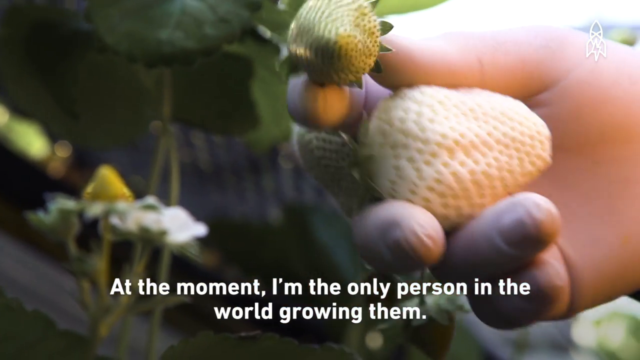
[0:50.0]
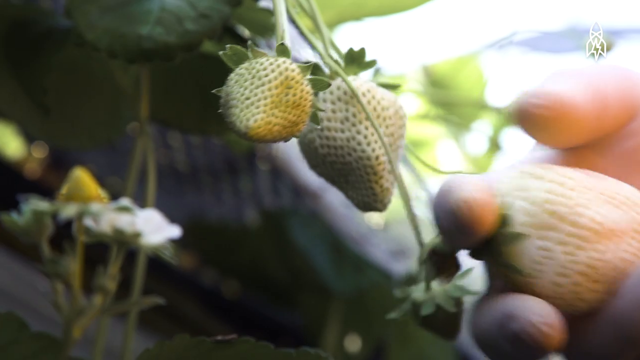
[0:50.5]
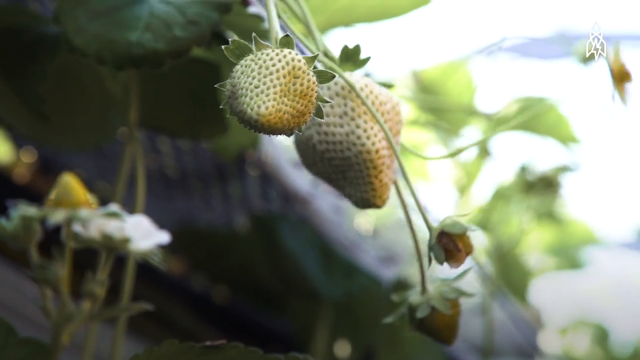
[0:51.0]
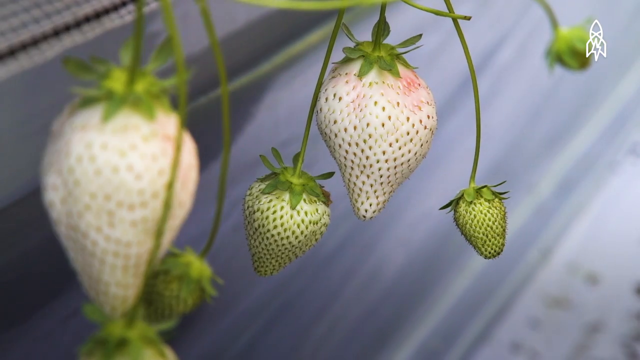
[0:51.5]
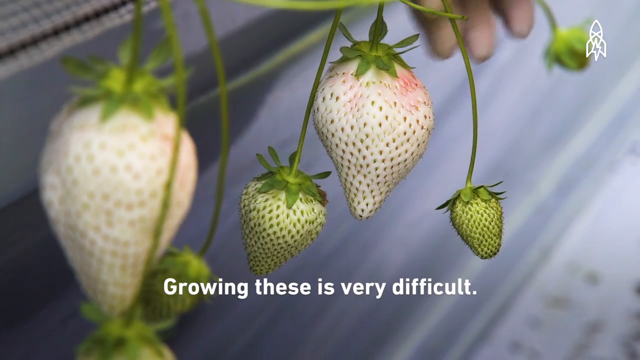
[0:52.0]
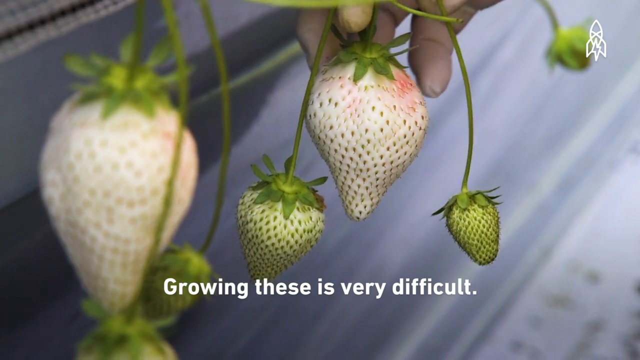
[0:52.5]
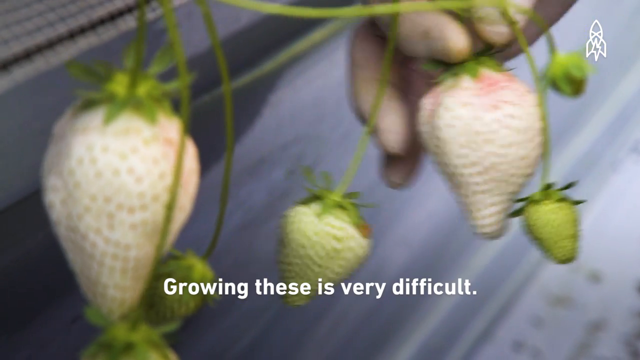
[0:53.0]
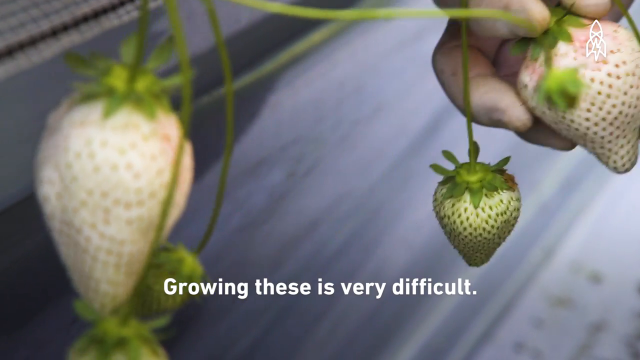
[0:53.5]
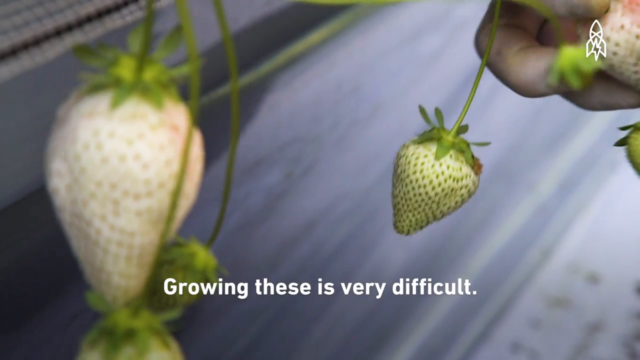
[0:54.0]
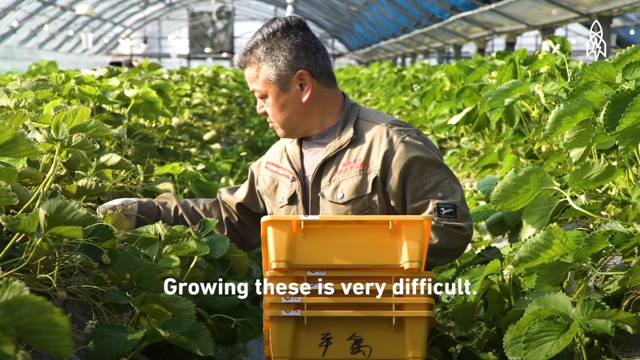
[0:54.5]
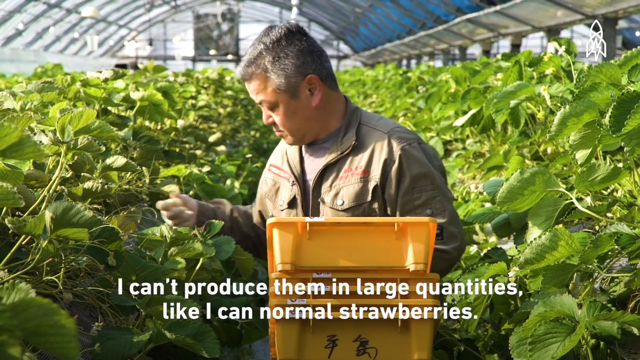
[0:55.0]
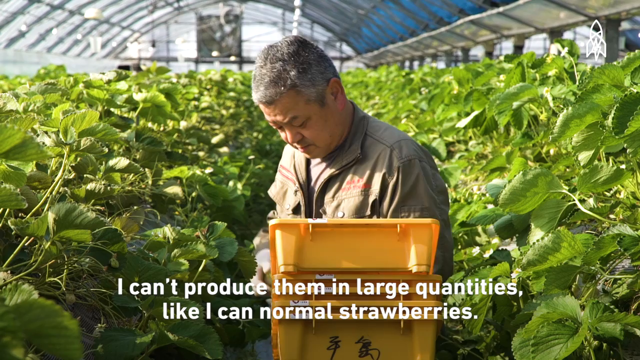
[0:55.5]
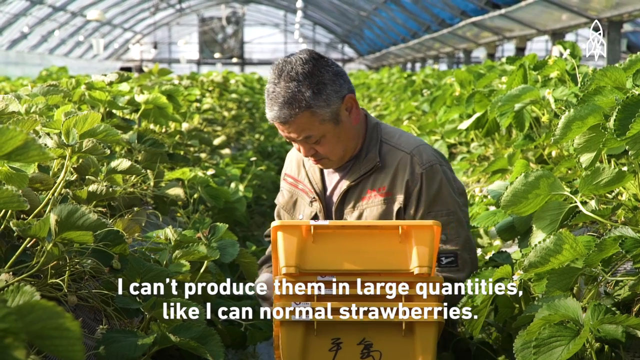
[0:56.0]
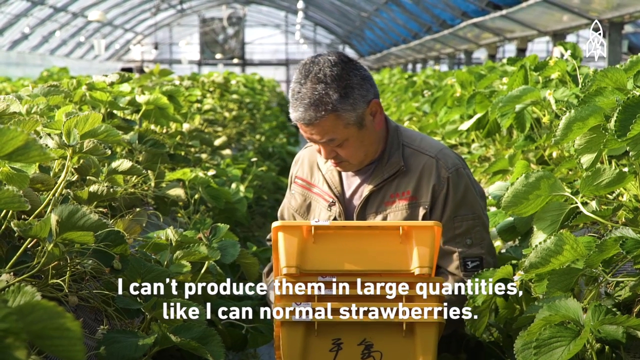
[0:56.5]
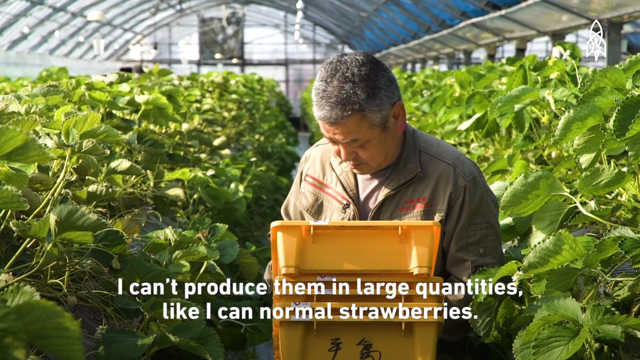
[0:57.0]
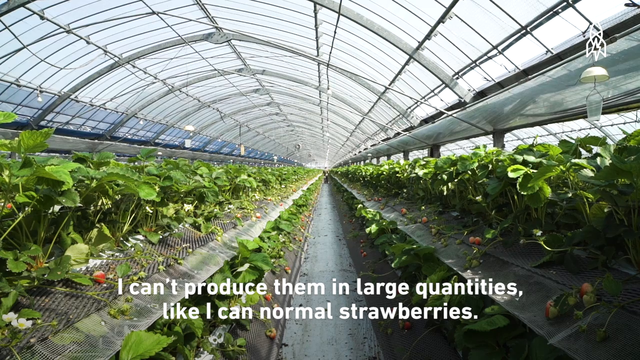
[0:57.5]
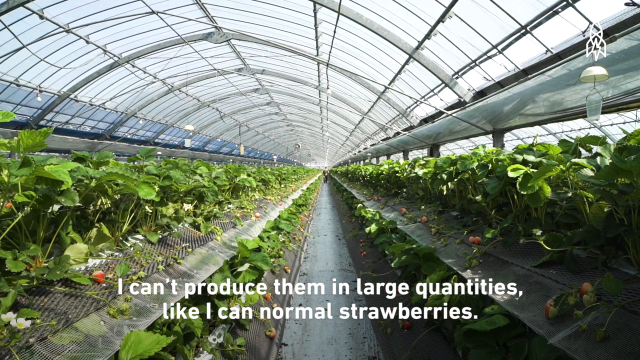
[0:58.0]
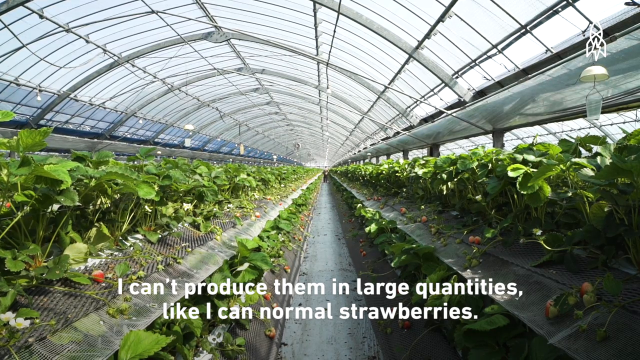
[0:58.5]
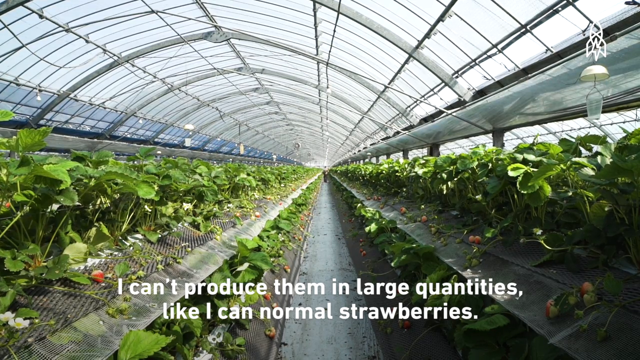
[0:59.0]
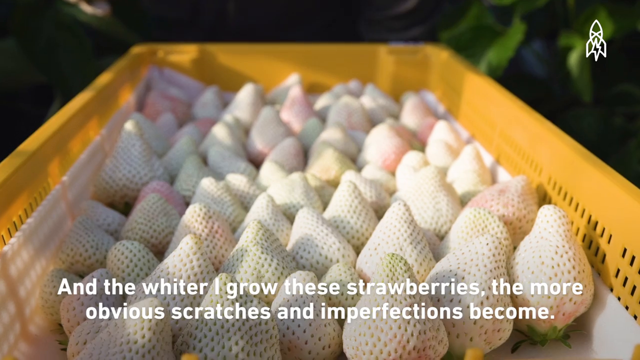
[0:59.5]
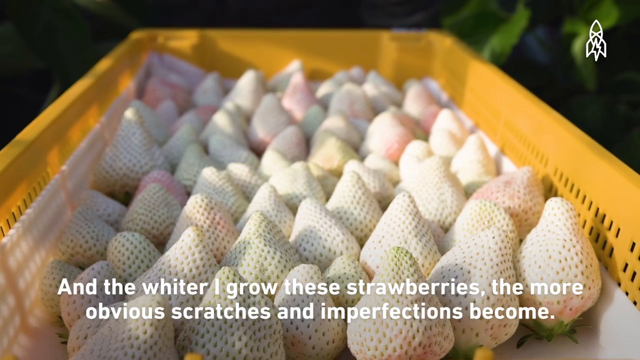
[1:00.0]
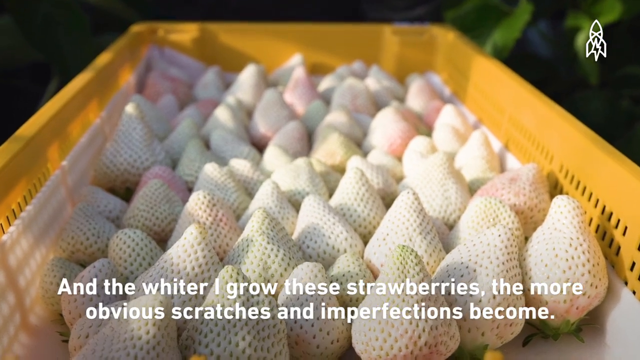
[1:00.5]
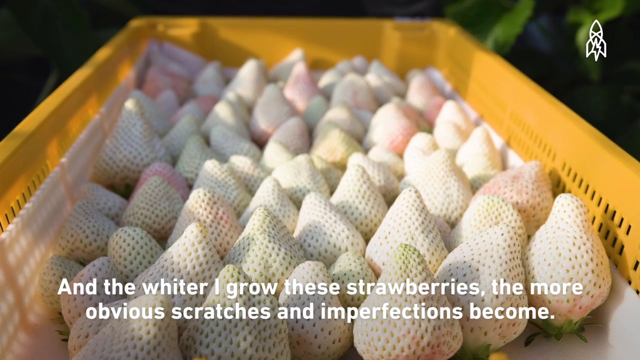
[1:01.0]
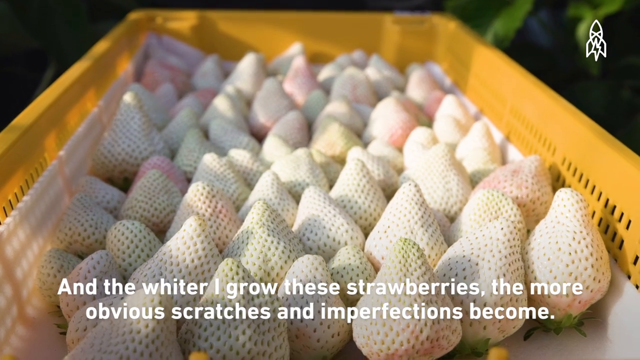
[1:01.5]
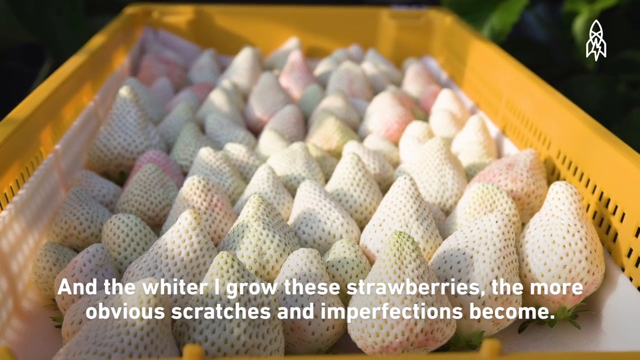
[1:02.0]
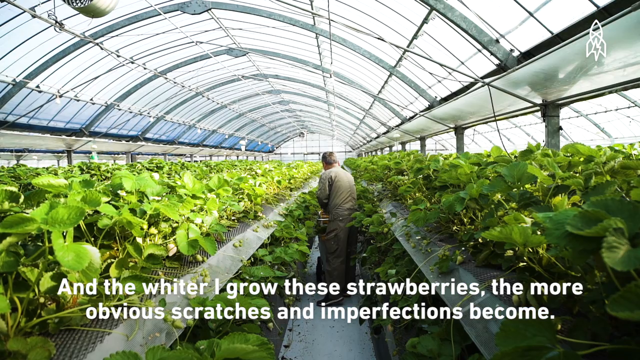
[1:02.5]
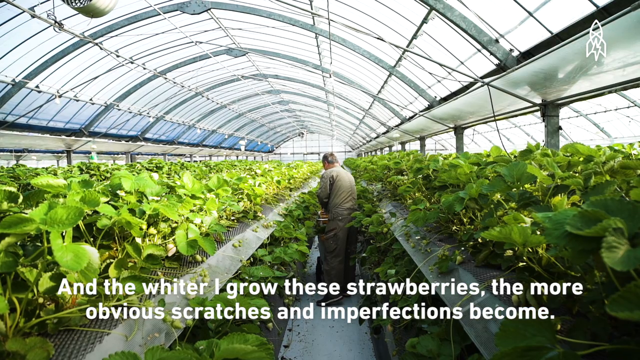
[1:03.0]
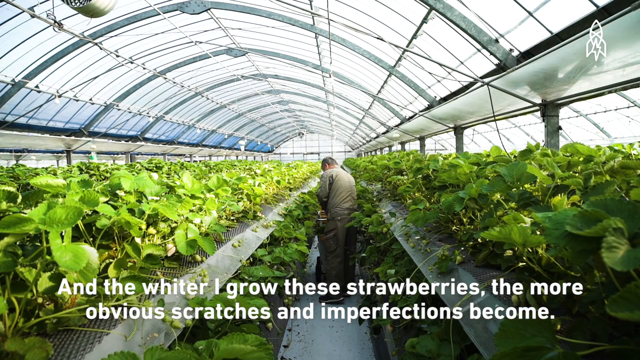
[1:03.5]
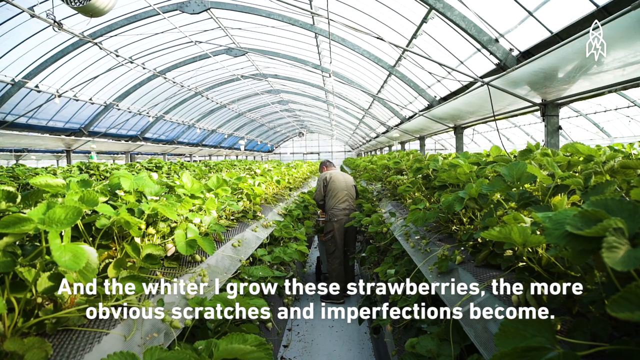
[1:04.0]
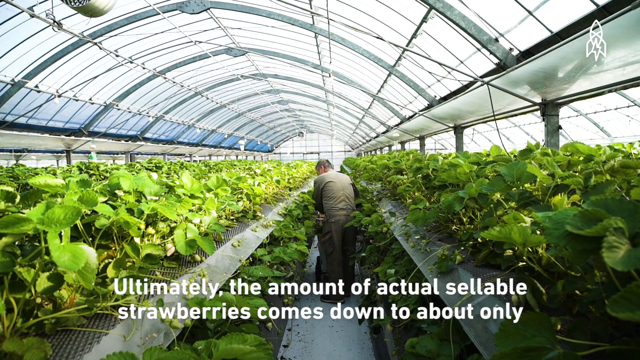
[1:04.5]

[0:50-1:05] Mr. Tashima picks strawberries off the branches again. The ripe strawberries are large, while the growing strawberries are small and still slightly green. His greenhouse is very large and well-lit.